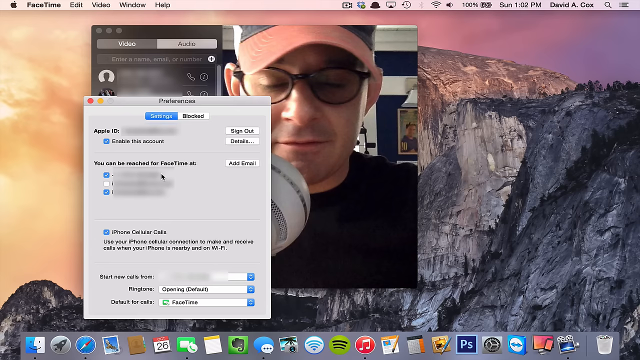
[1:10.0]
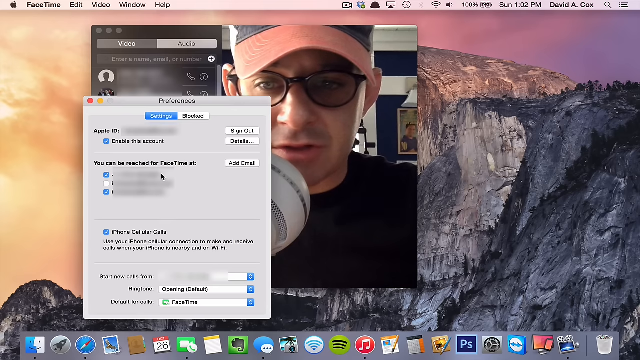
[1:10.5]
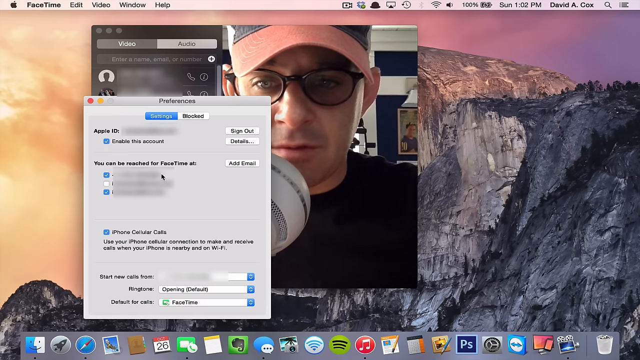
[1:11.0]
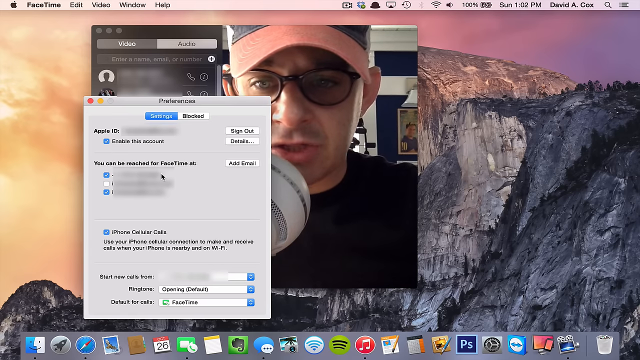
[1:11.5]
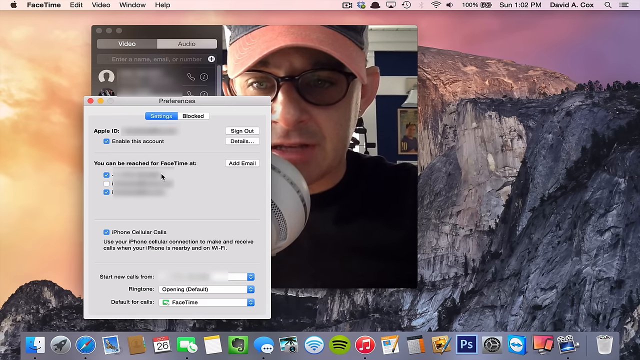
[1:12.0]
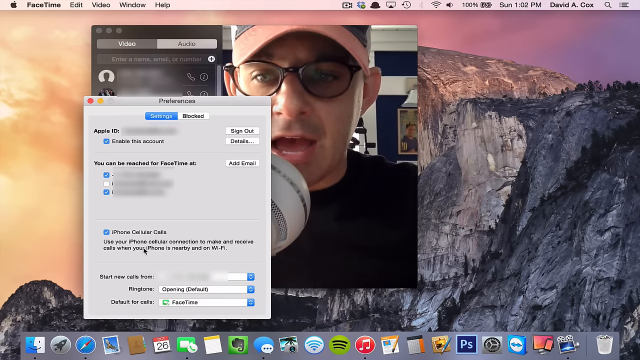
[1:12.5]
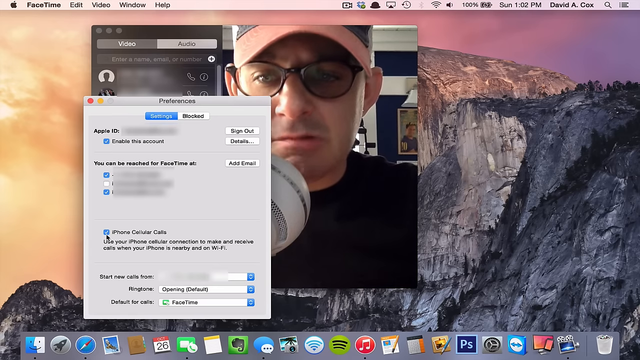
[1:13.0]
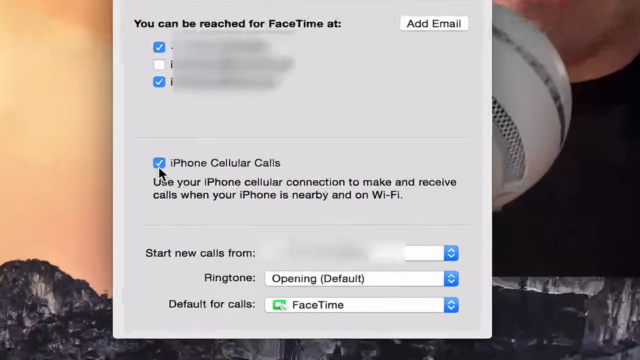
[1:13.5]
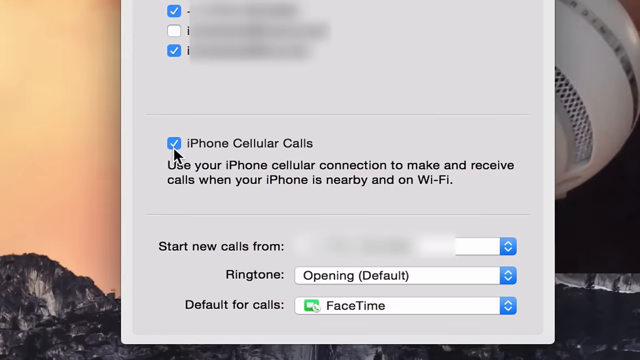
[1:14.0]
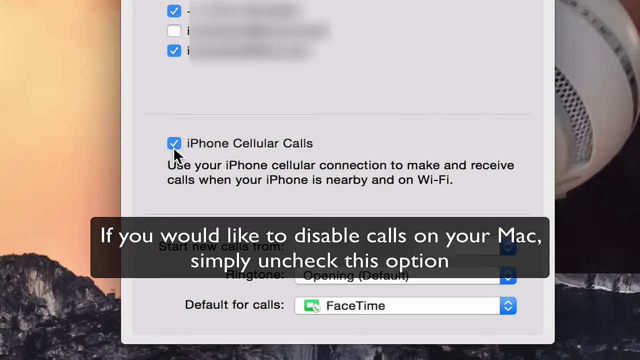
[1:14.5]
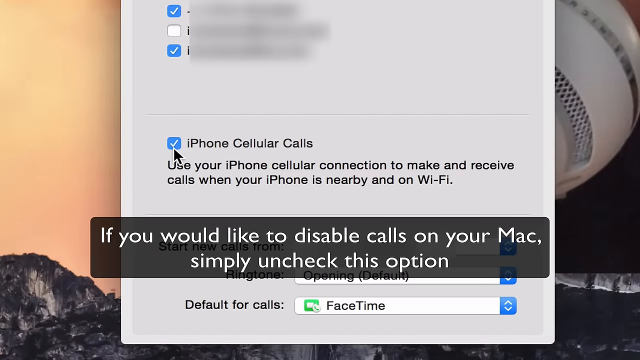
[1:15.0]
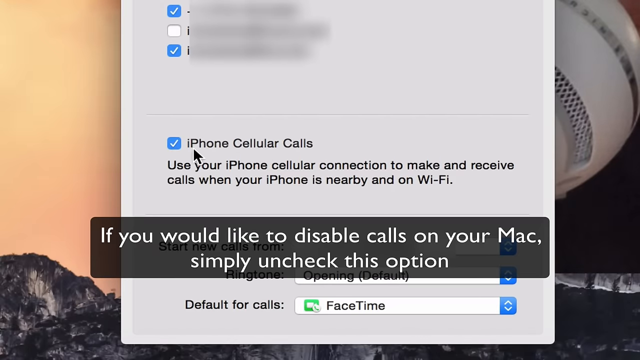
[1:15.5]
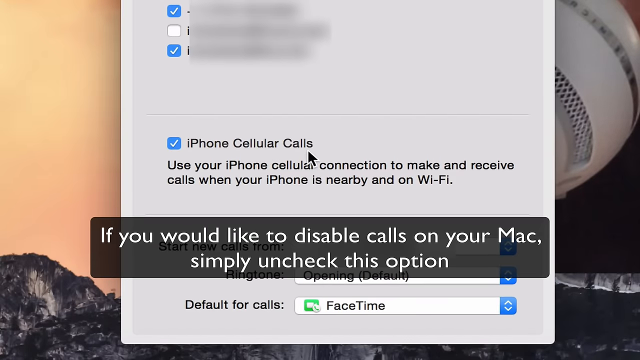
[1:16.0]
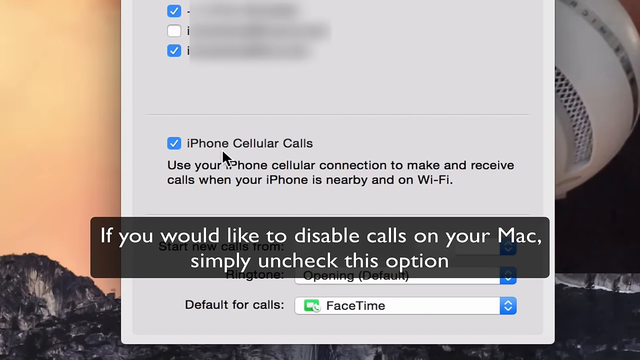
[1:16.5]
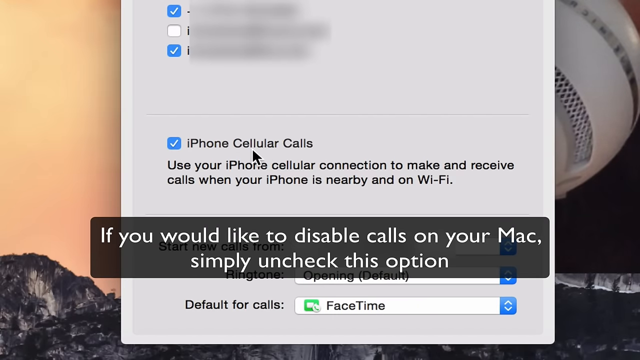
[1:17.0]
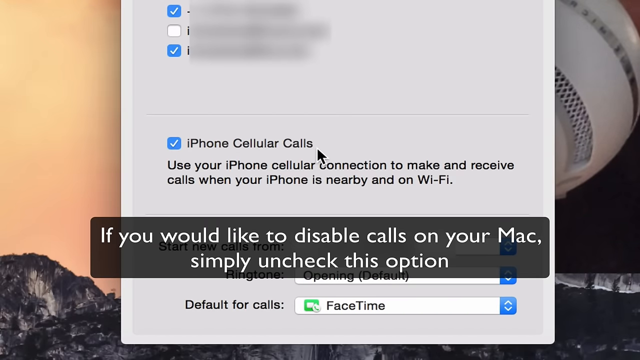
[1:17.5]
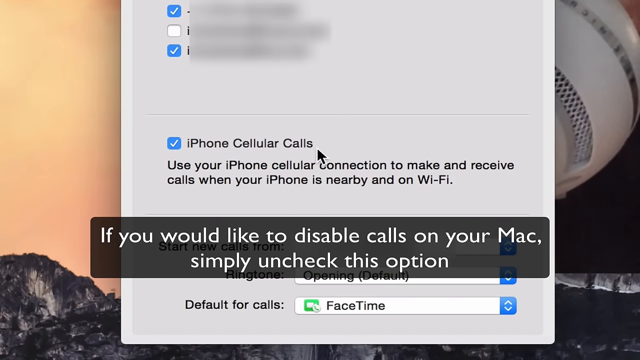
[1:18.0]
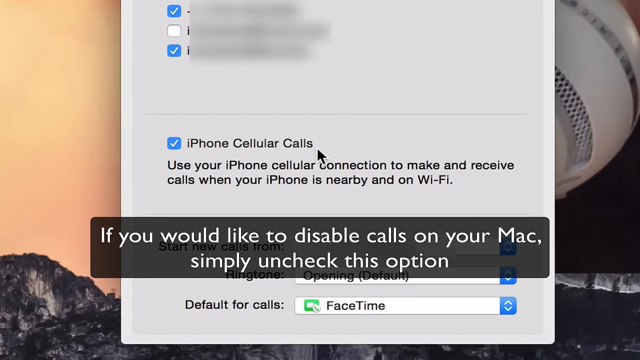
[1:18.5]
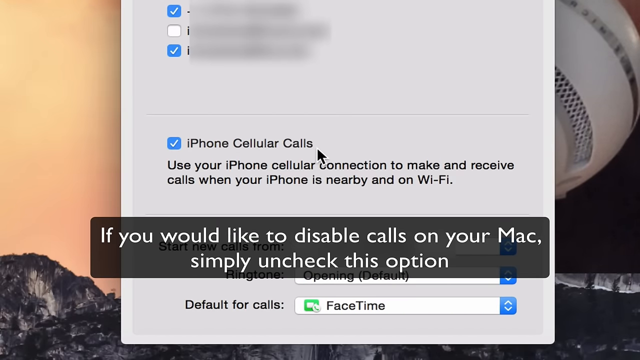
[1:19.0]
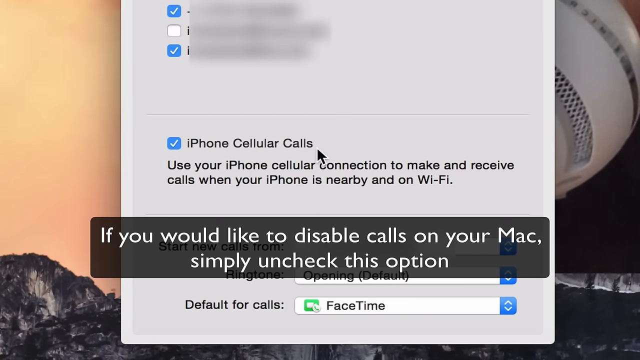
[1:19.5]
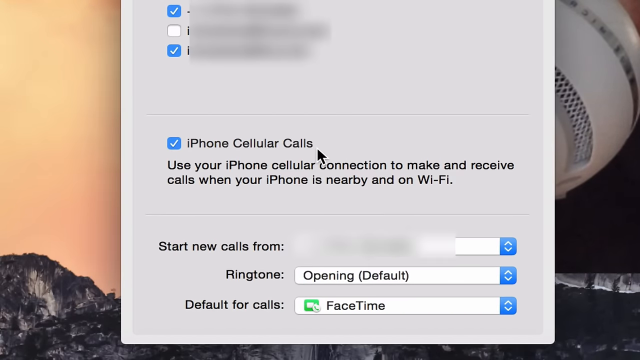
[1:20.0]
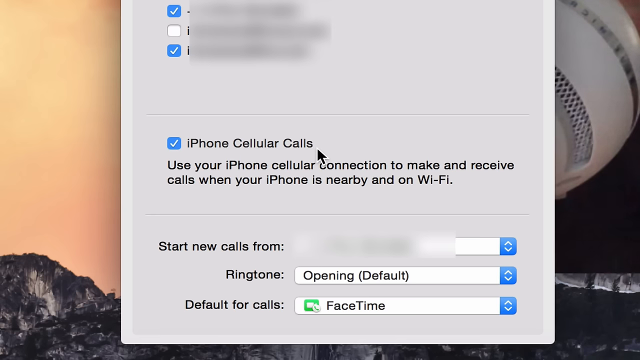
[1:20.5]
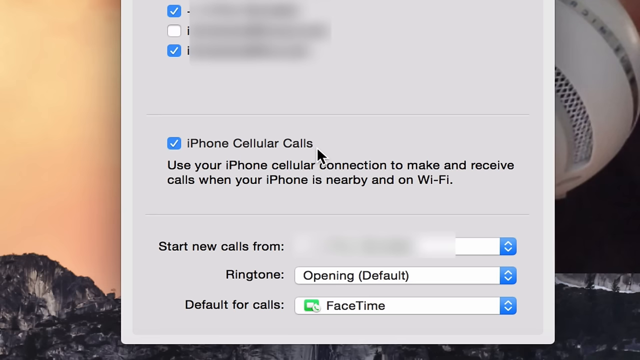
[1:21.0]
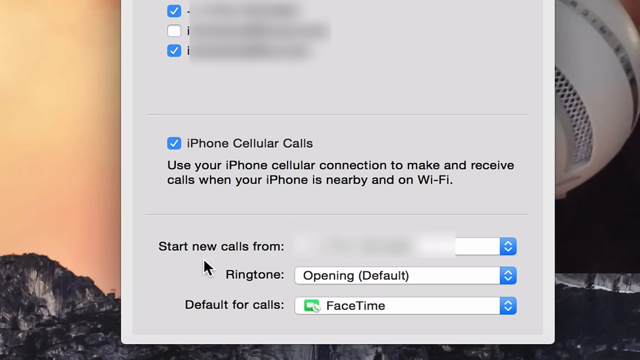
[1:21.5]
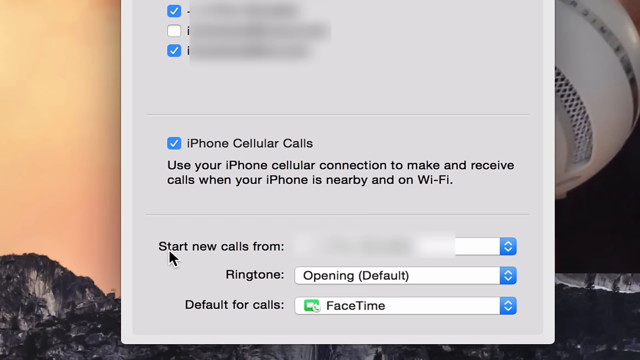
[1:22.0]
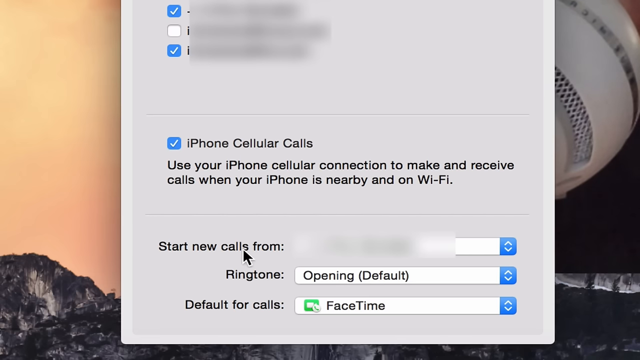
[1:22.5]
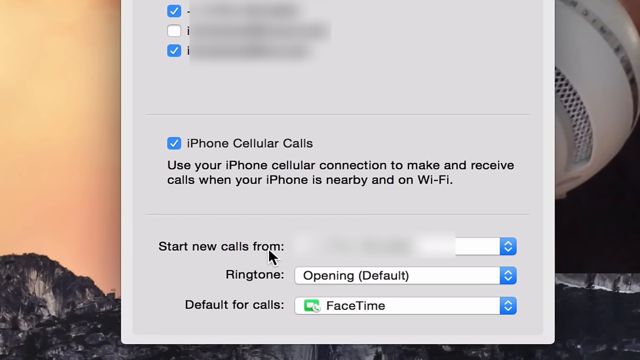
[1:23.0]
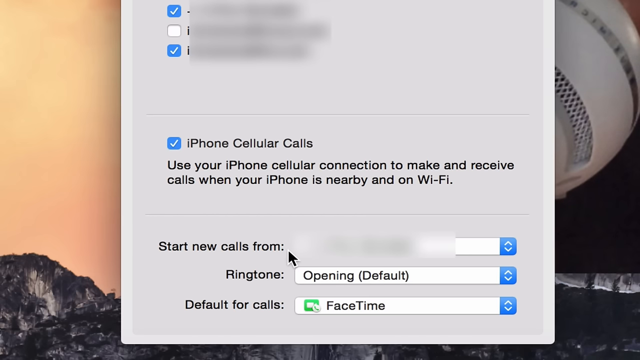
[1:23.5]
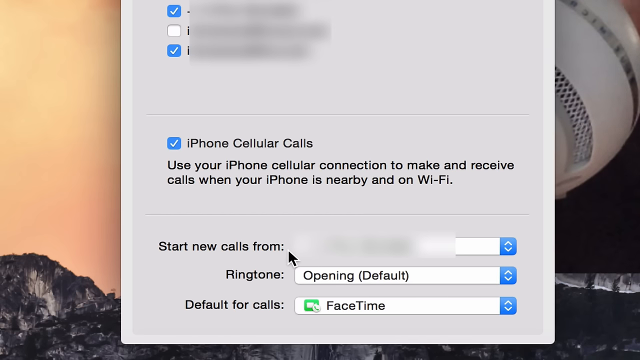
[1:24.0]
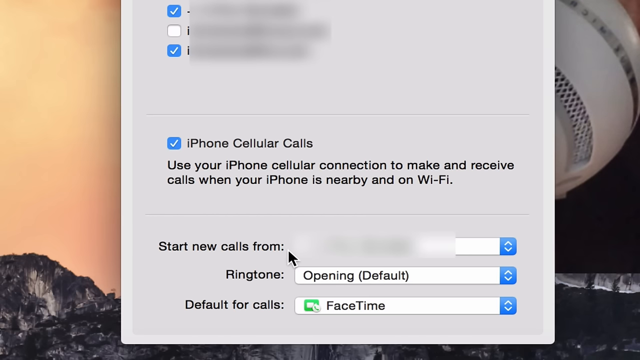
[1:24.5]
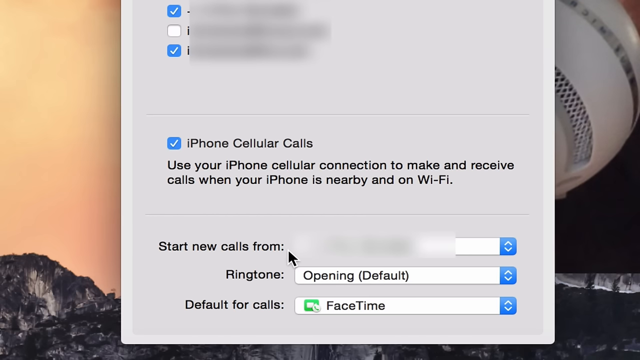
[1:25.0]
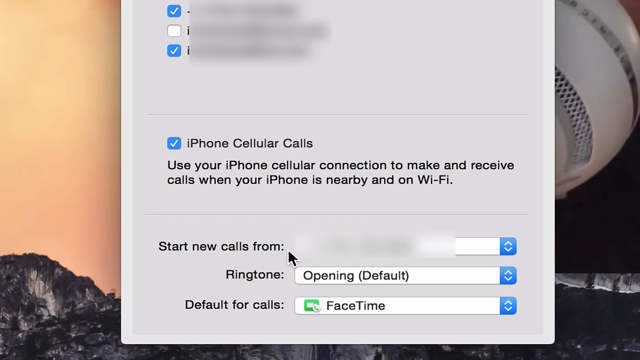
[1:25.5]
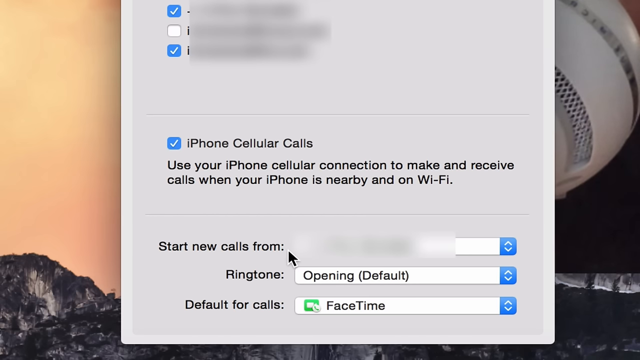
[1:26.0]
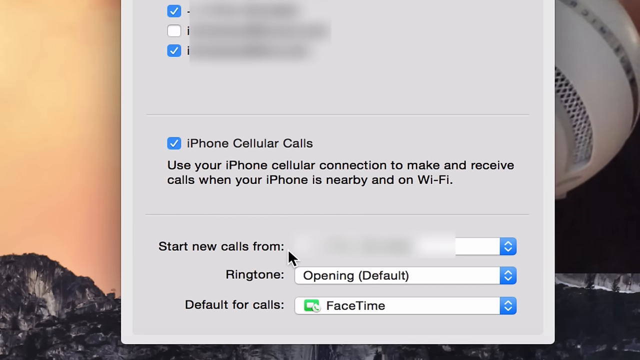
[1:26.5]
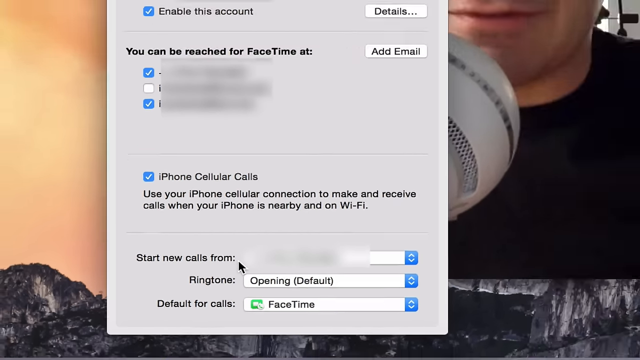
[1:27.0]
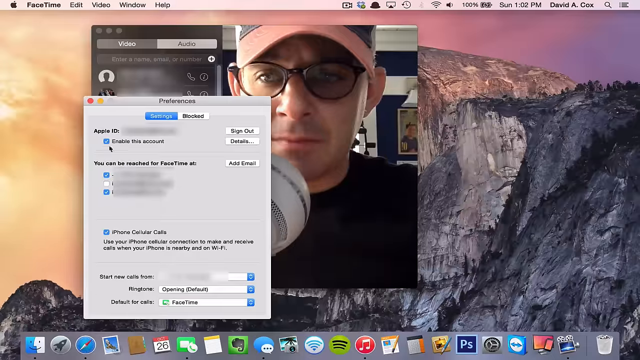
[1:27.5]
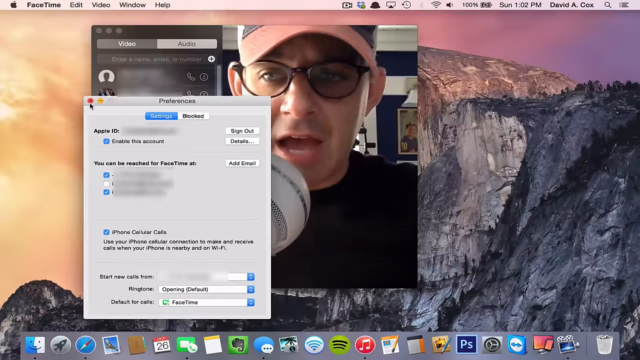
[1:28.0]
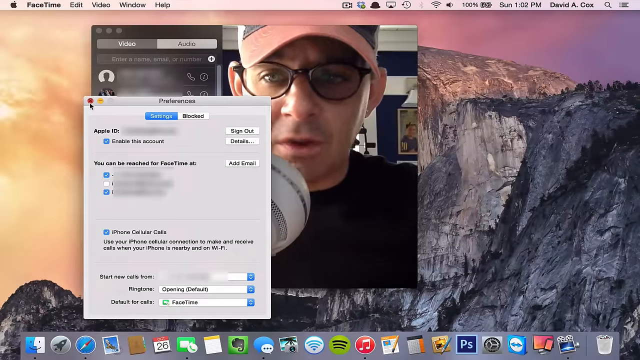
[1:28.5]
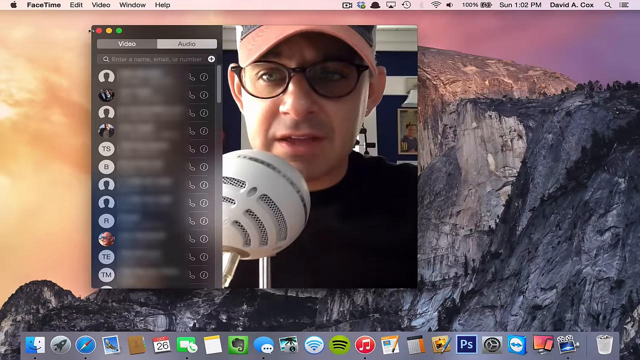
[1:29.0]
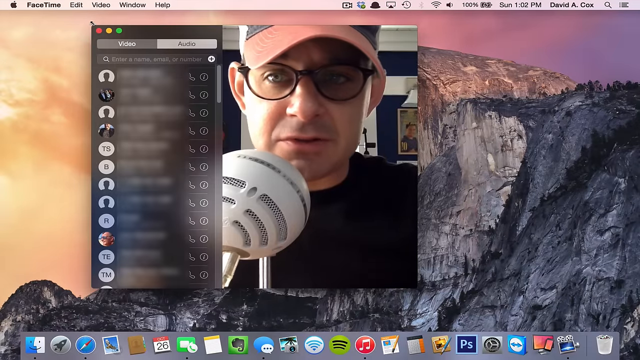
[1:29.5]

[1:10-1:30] The man remains in a box in front of the mountain face, with his big white microphone. He is doing something with an iPhone, setting it up so that calls default to FaceTime. A setting reads "start new calls from", followed by a blurred-out entry, probably personal information. He looks very intense as he talks, and text reads "If you would like to disable calls on your Mac, simply". He keeps talking while using the computer. Behind the iPhone setup screen is another screen with the header "video audio", which then reads "enter a name, email, or number".